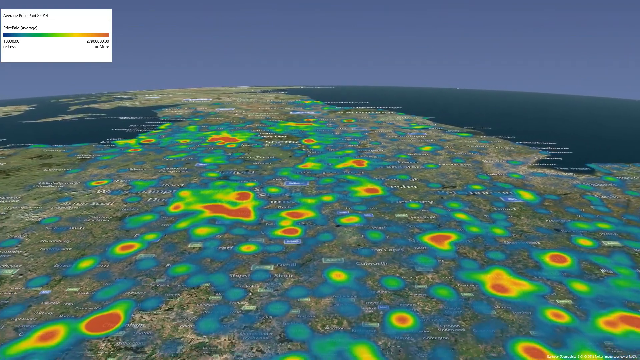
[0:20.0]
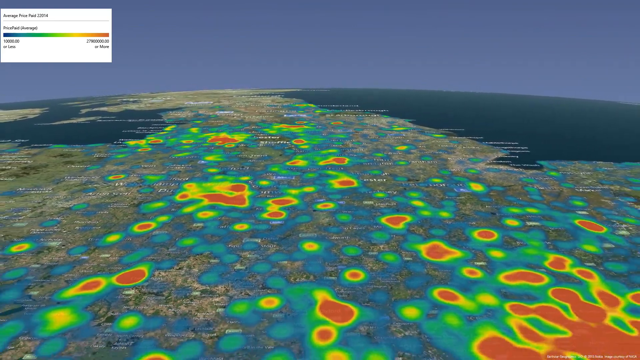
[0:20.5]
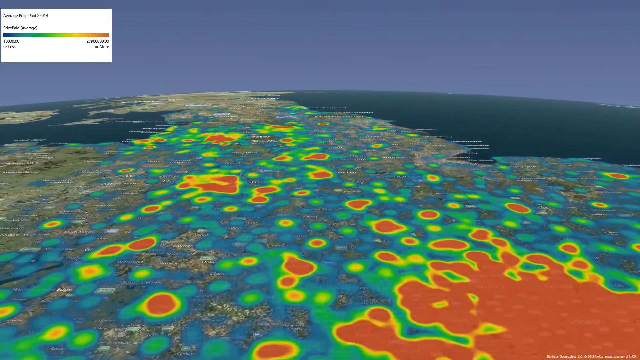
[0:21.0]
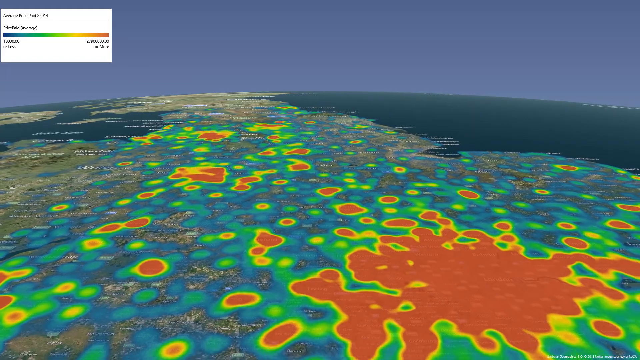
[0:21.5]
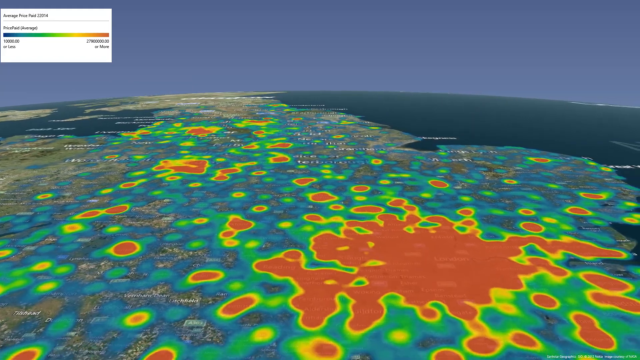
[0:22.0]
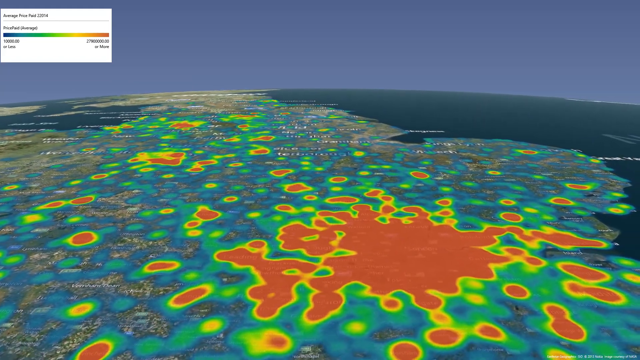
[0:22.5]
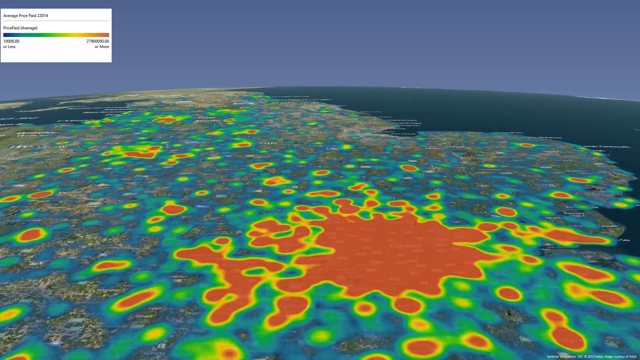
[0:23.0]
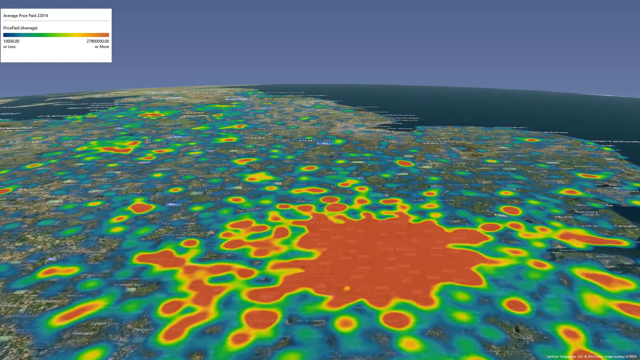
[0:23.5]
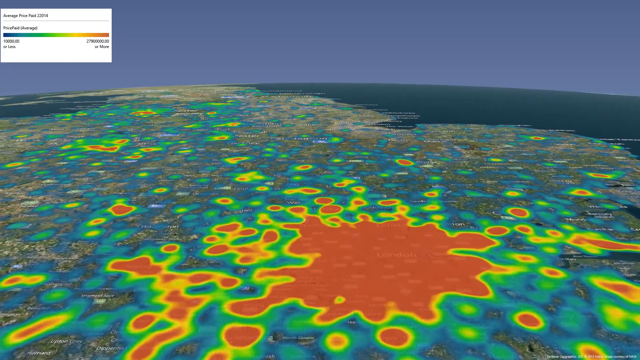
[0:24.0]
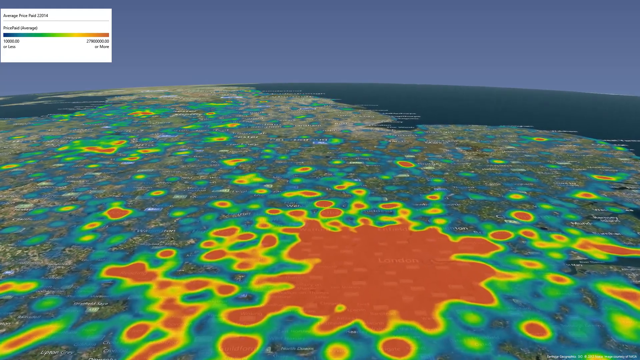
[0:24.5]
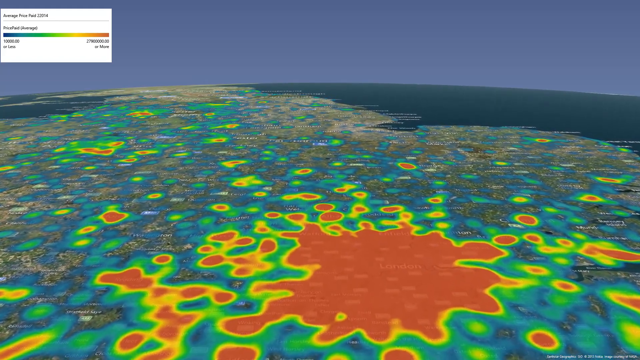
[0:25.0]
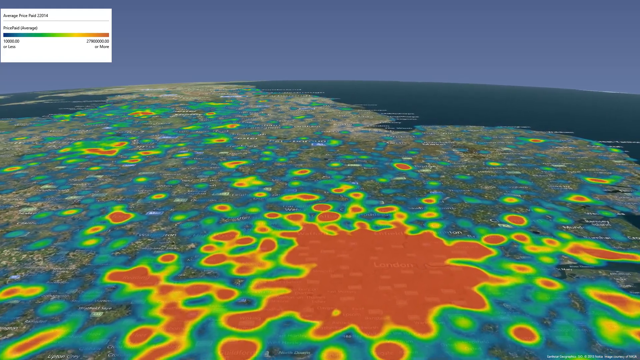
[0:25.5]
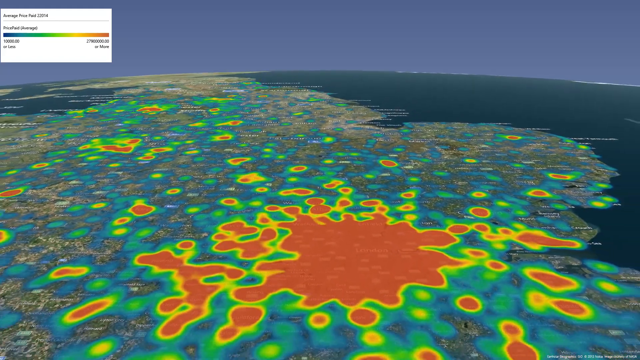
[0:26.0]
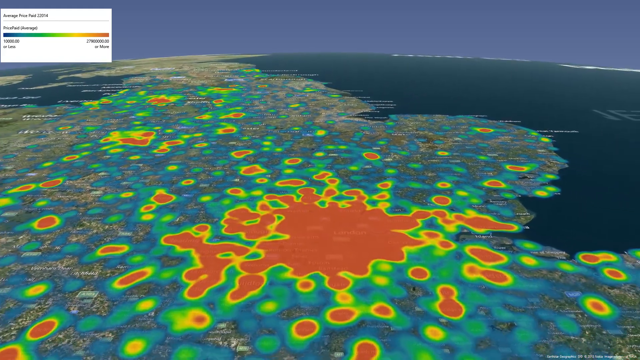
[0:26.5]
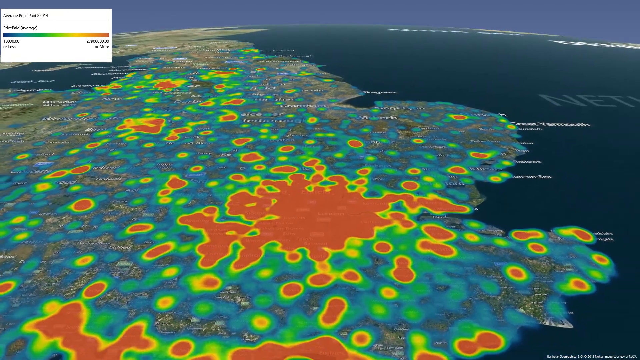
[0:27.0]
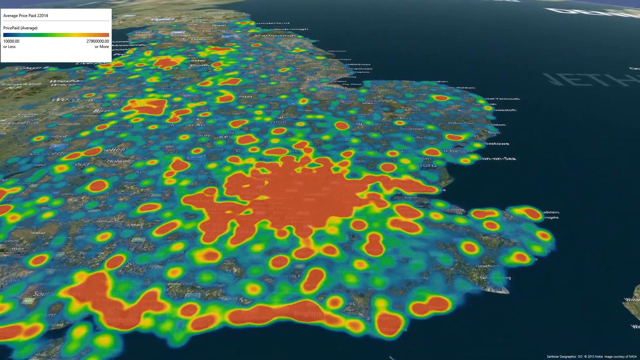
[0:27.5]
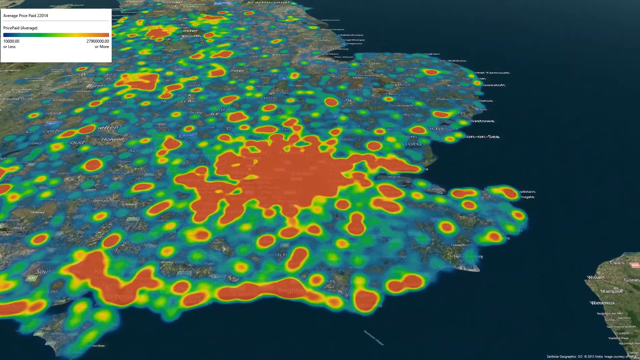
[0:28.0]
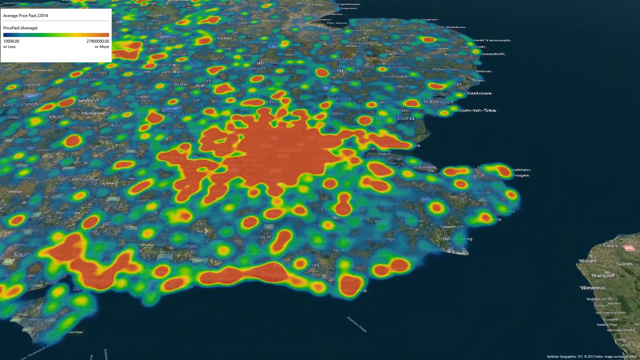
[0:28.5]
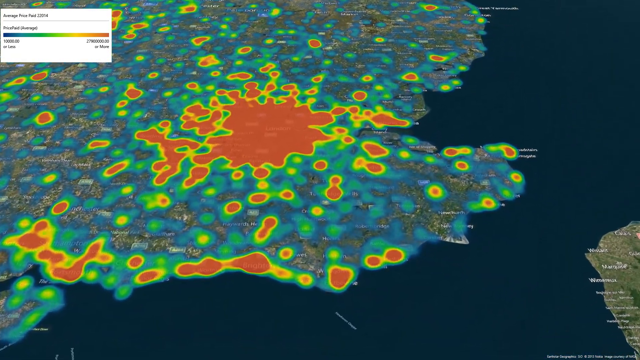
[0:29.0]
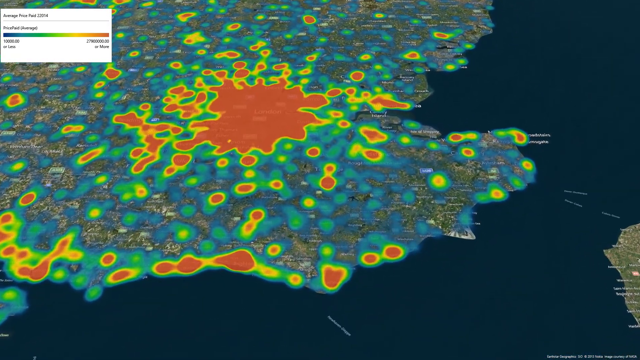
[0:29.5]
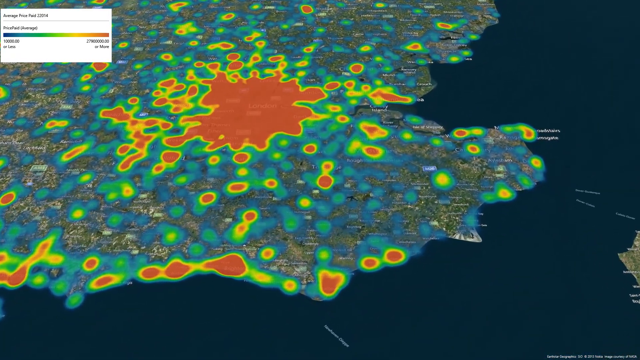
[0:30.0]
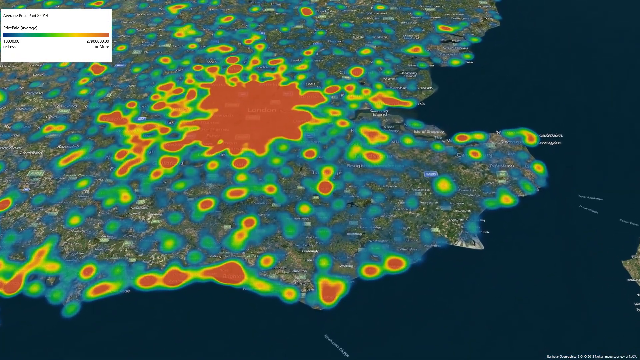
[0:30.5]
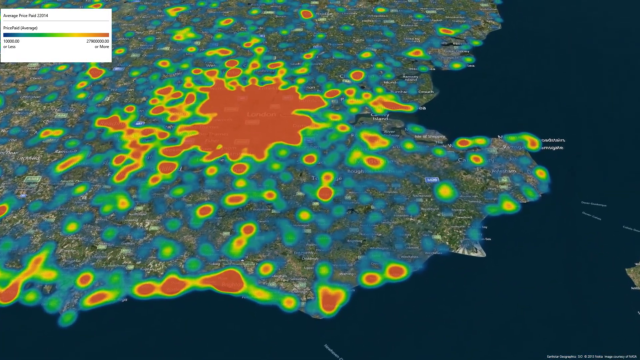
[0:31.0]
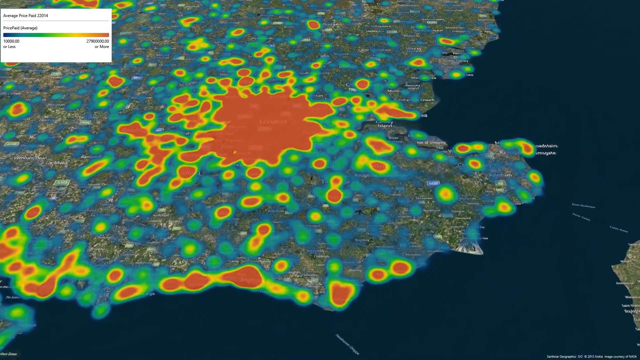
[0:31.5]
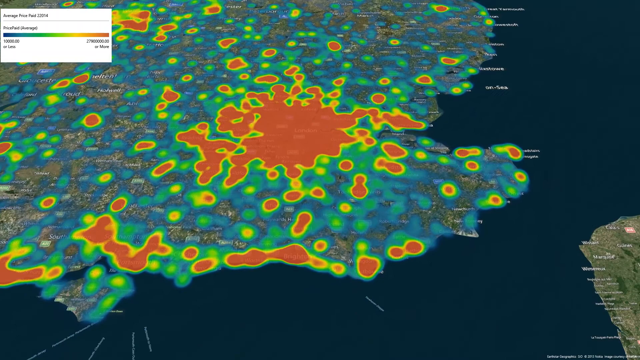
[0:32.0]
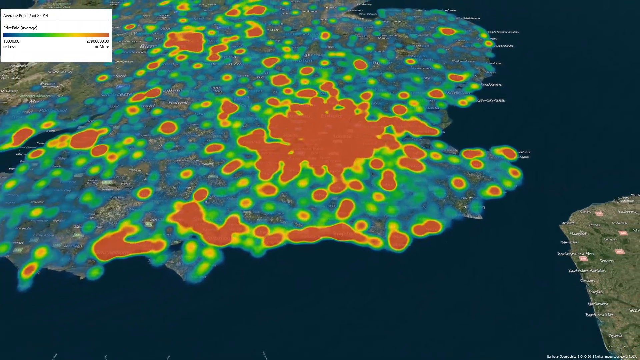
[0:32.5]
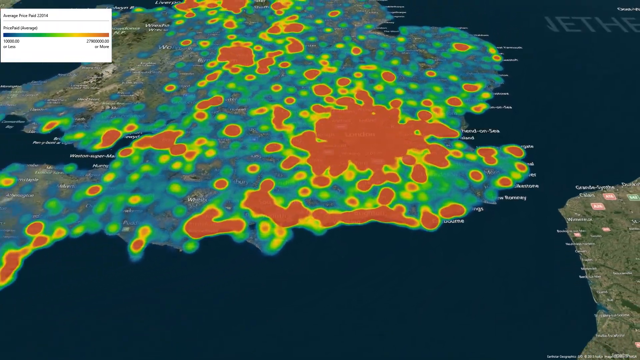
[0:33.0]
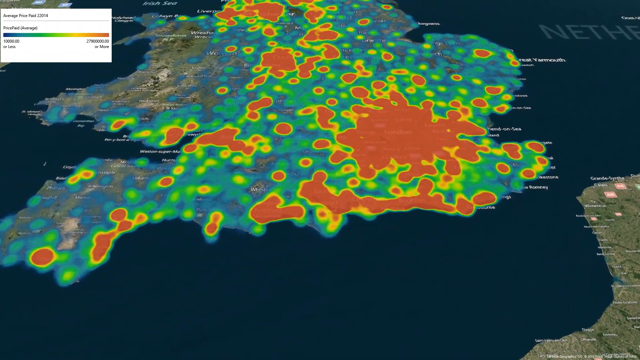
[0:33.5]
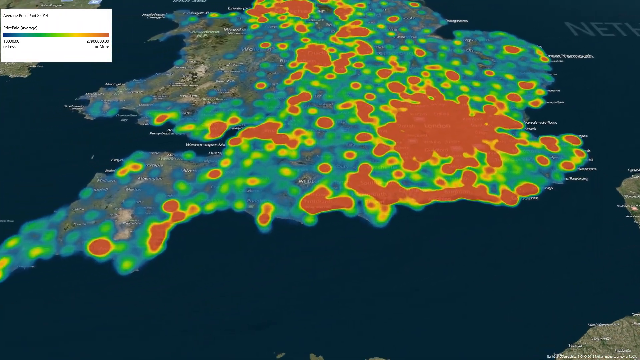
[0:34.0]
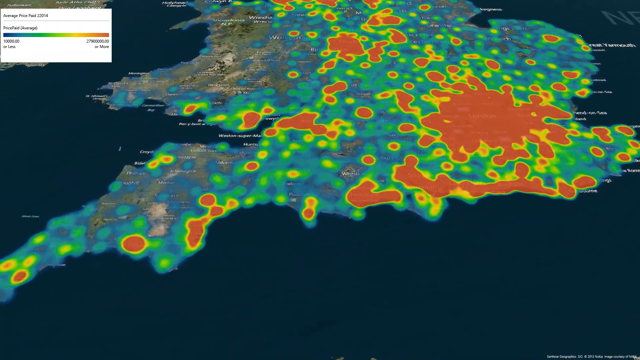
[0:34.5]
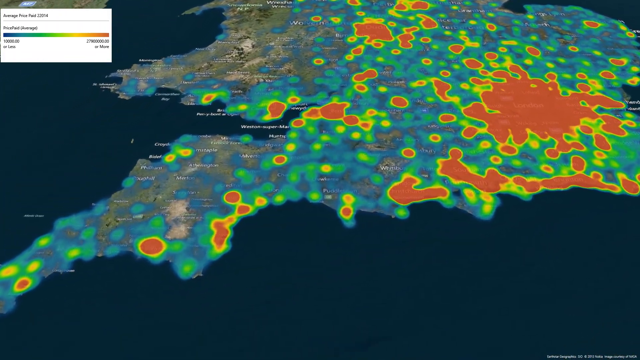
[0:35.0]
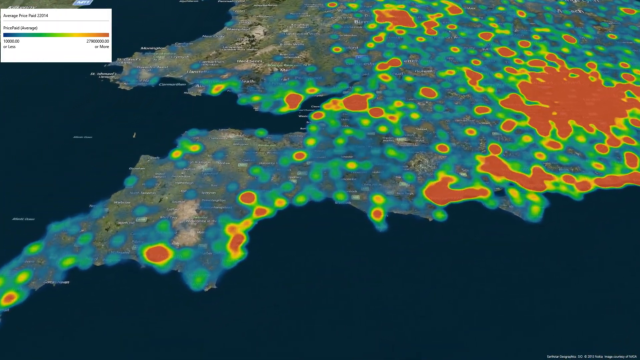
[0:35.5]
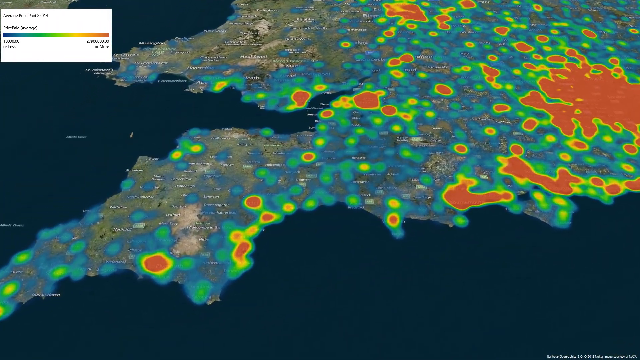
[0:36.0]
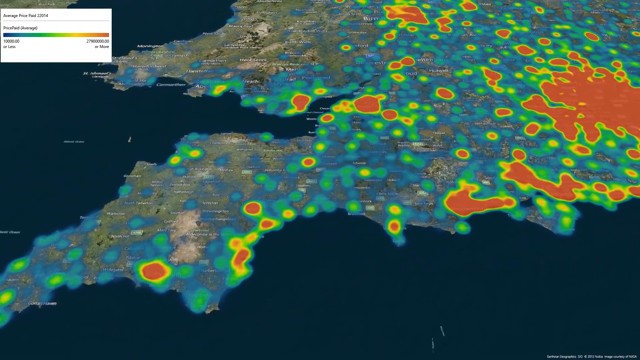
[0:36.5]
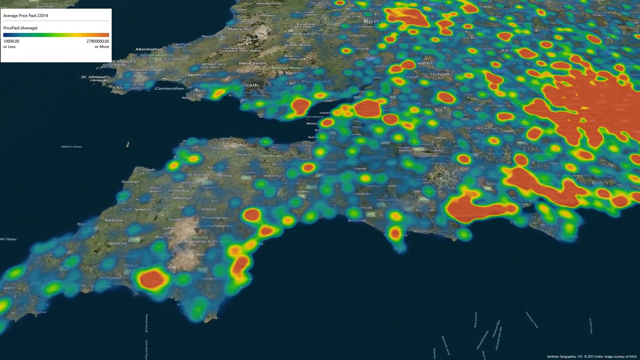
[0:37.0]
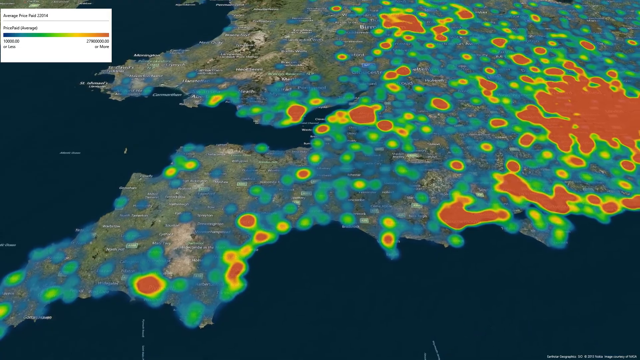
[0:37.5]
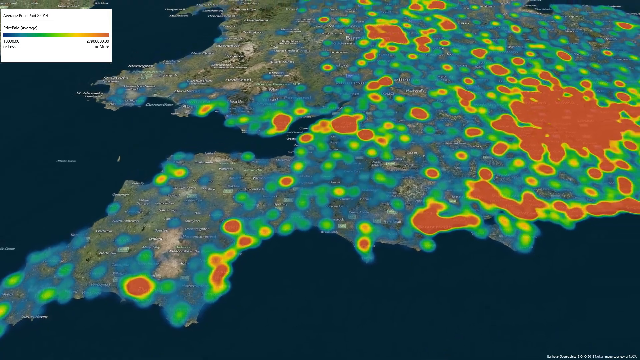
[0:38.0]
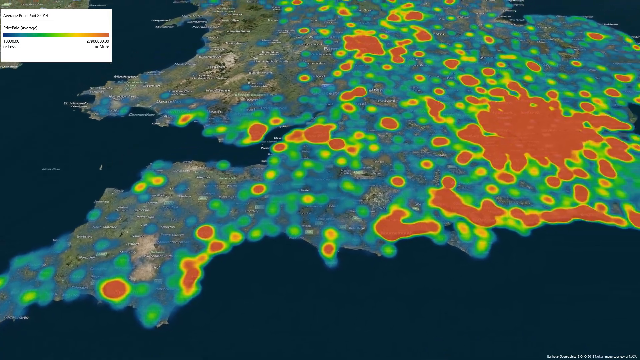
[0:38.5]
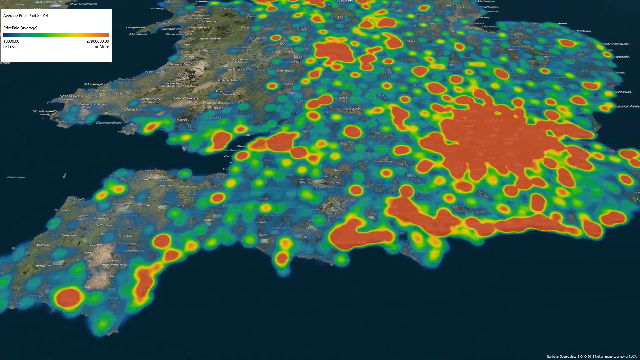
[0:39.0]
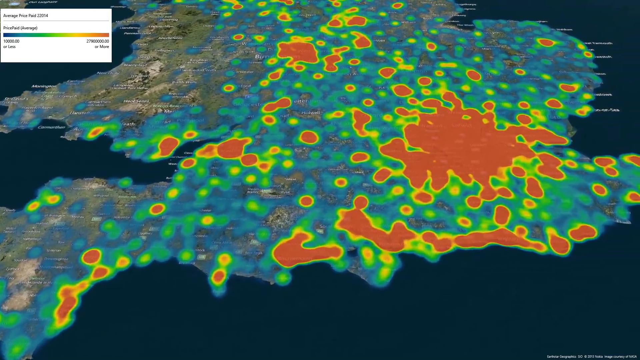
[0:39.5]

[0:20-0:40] The map moves closer, then moves backwards and up over the land. A large pocket becomes much more red, and it is the main reason the map looks more red than blue and green from overhead. Toward the edges, the red becomes more pronounced as the map zooms out, but as it zooms in, only a large portion toward the bottom of the screen actually falls into the graph's red range. The box at the top reads "AVERAGE PRICE PAID"; none of its other text can really be made out except "PRICE PAID AVERAGE". The color bar goes from dark blue into blue, dark green into green, lighter green into yellow, and orange into red. The landmasses are marked: Ireland and Scotland are on the left, England is in this portion of the map, and Denmark and the Netherlands are marked on the right.